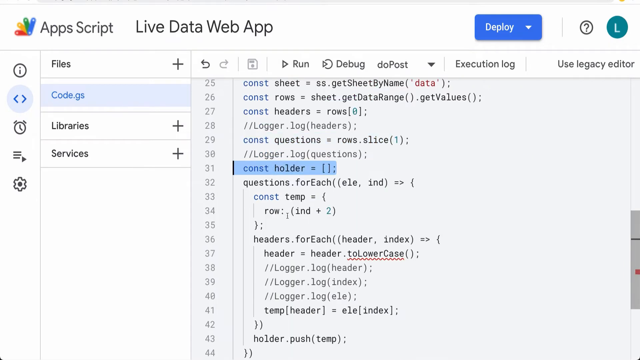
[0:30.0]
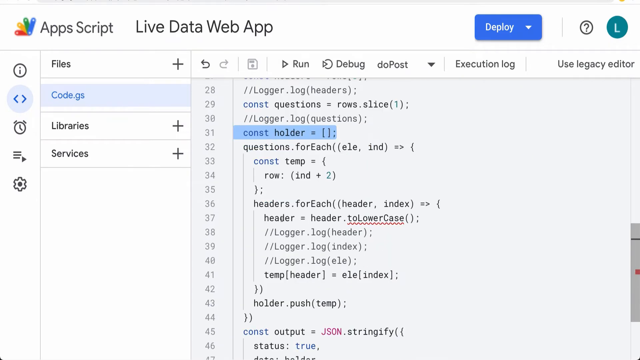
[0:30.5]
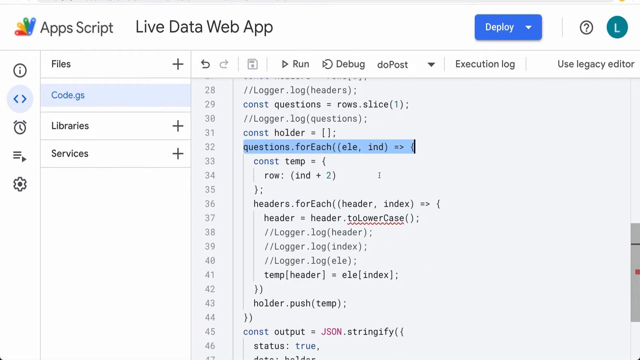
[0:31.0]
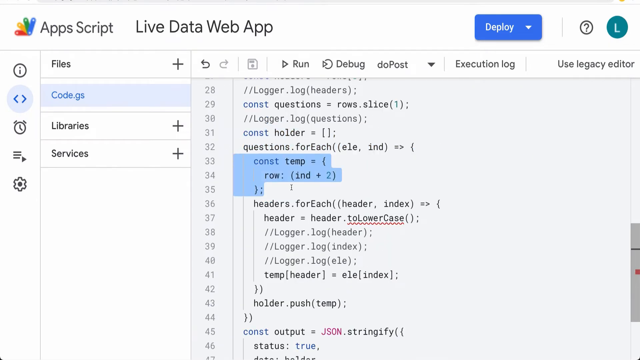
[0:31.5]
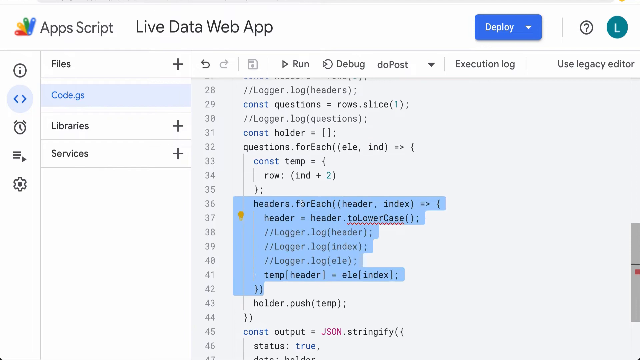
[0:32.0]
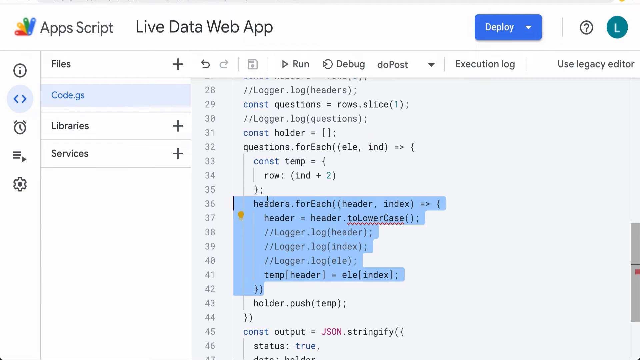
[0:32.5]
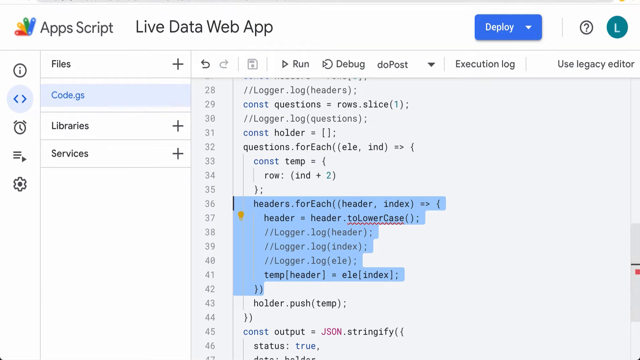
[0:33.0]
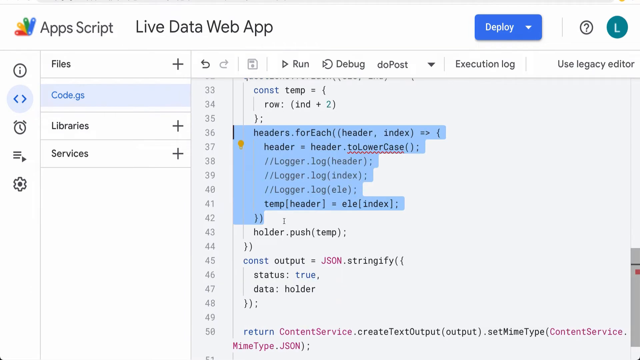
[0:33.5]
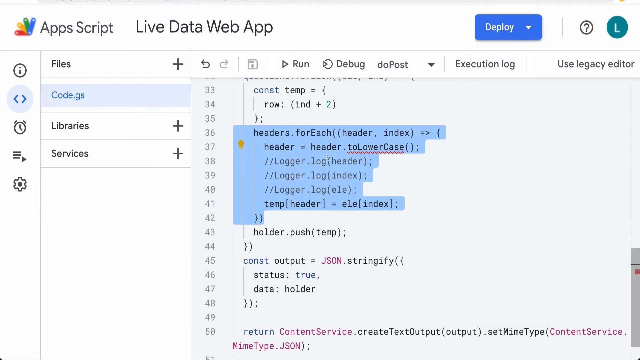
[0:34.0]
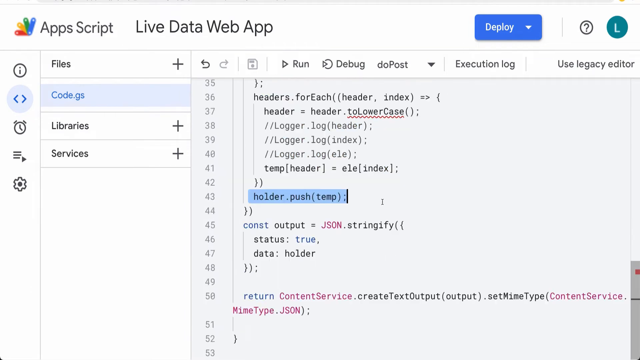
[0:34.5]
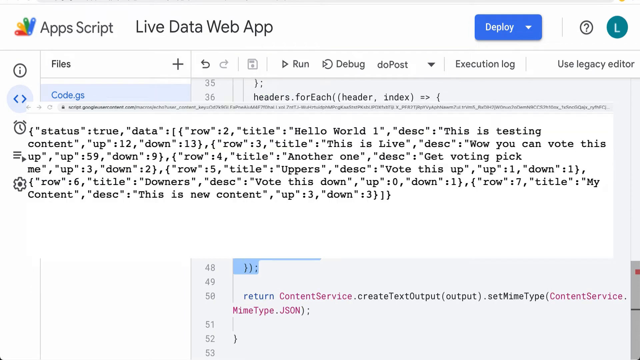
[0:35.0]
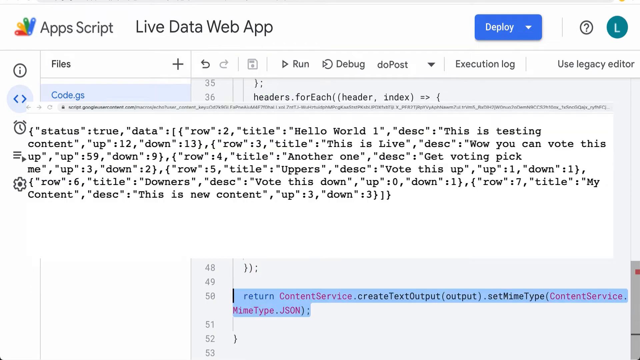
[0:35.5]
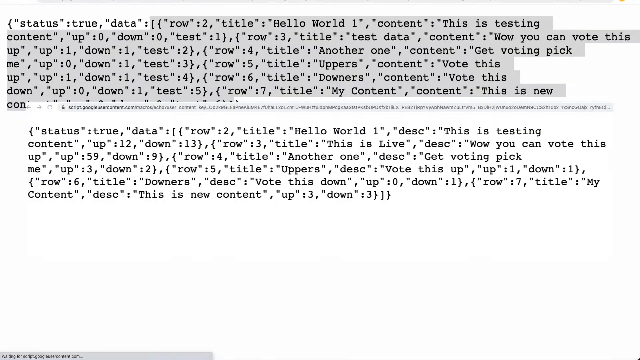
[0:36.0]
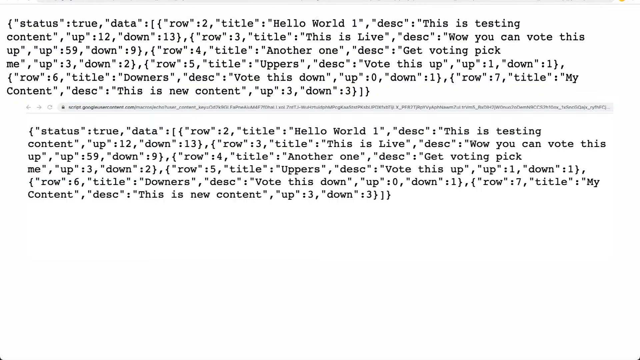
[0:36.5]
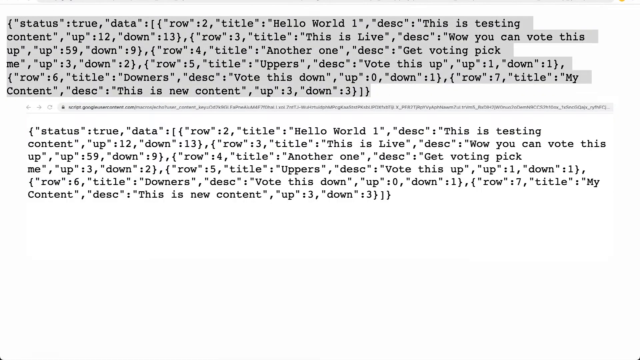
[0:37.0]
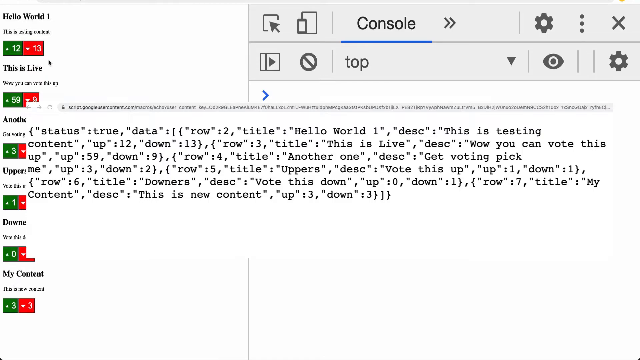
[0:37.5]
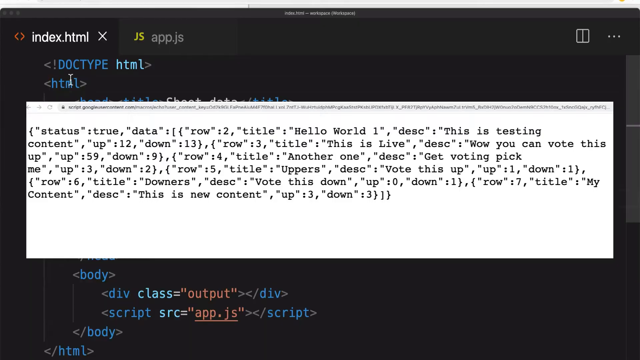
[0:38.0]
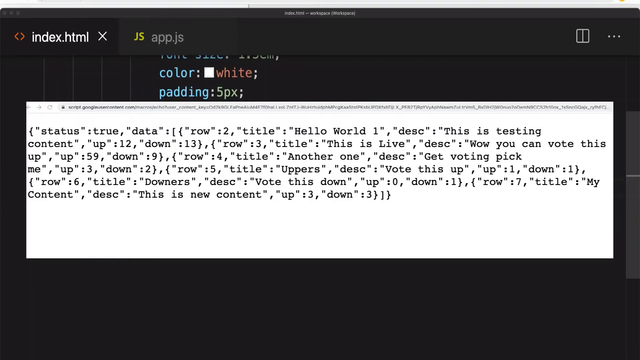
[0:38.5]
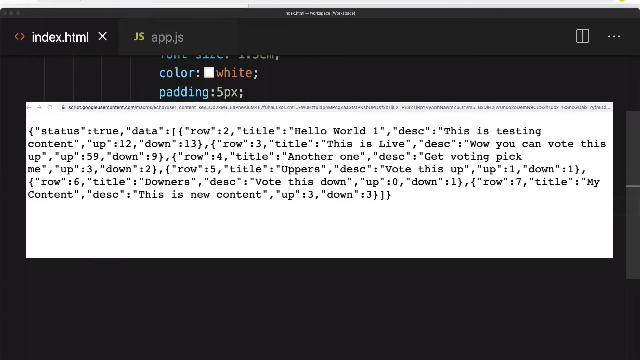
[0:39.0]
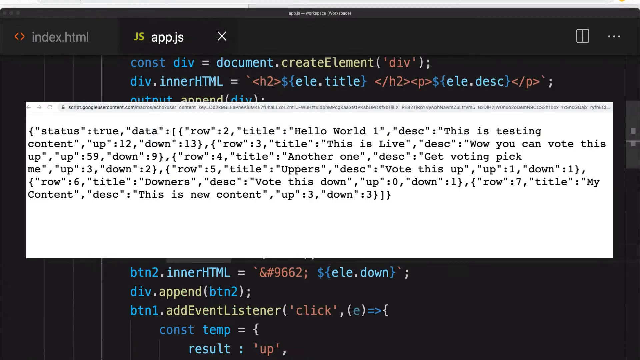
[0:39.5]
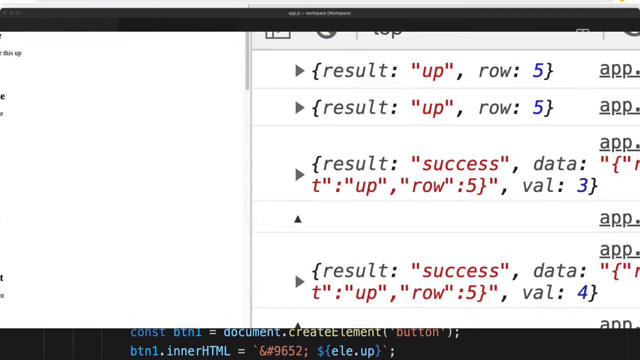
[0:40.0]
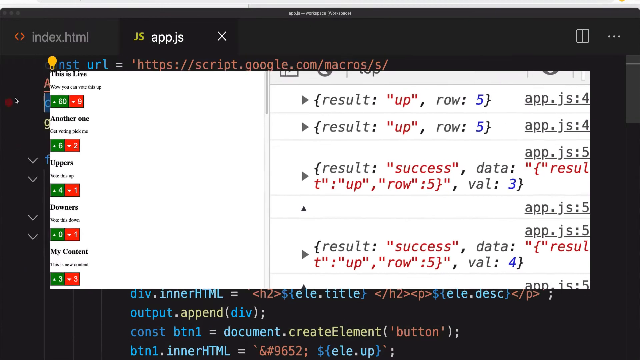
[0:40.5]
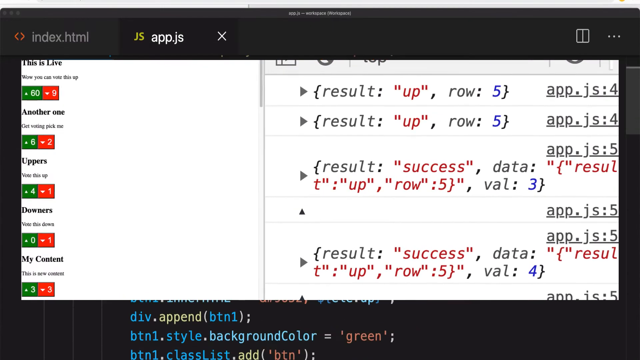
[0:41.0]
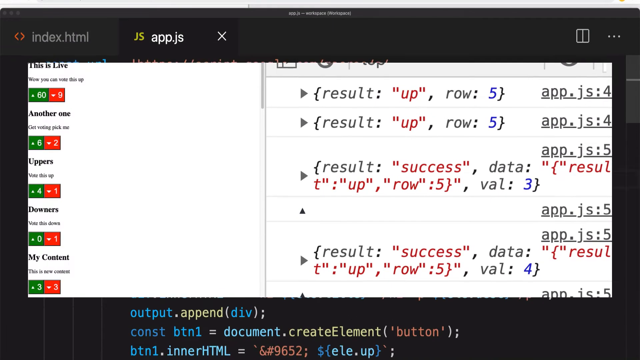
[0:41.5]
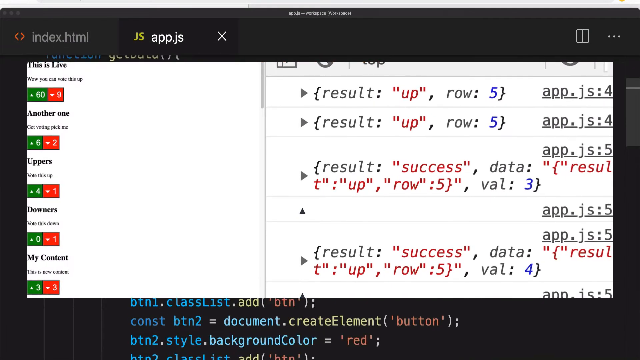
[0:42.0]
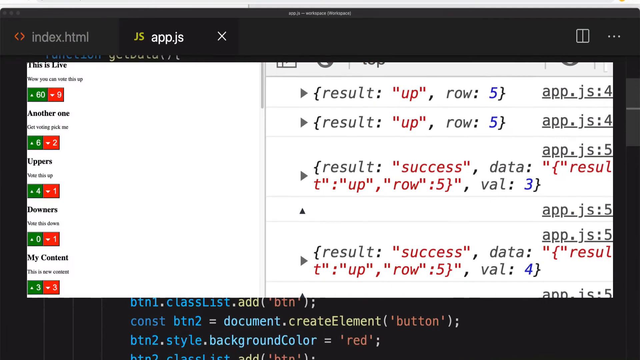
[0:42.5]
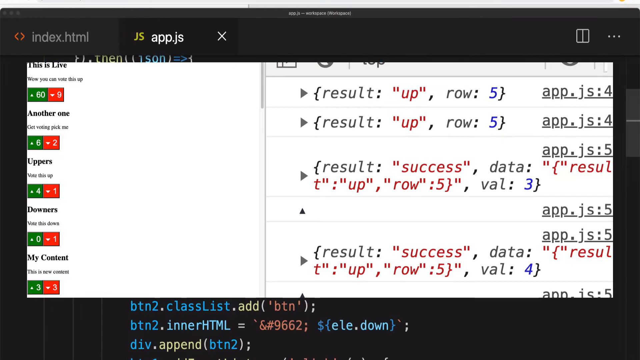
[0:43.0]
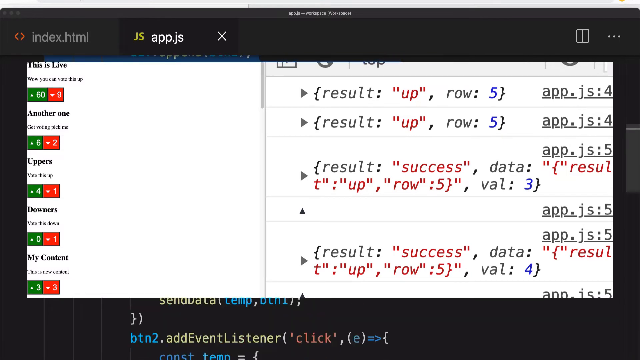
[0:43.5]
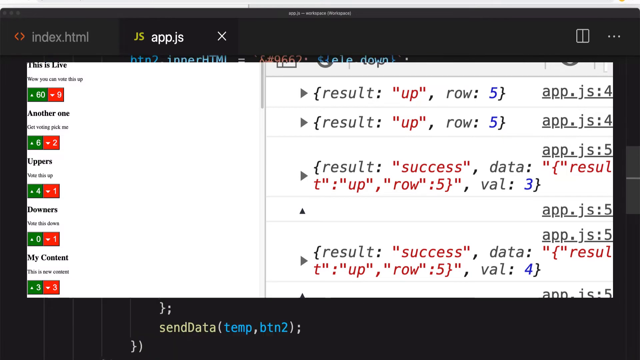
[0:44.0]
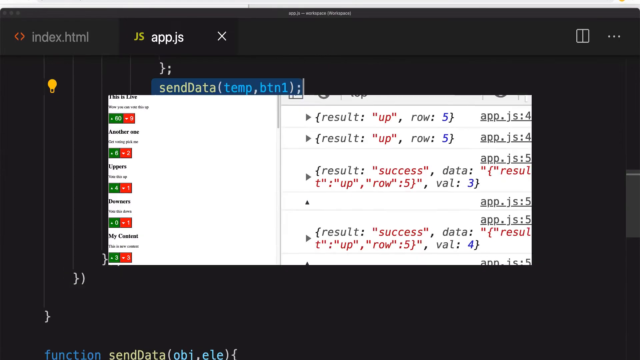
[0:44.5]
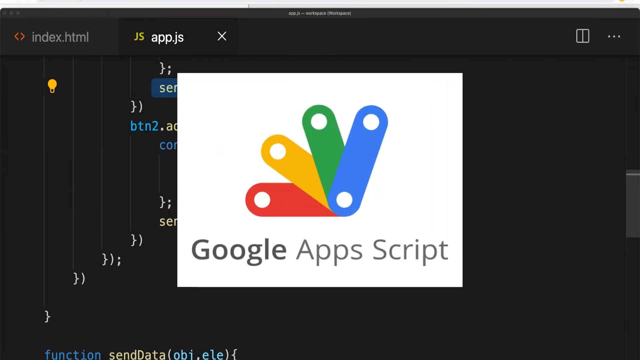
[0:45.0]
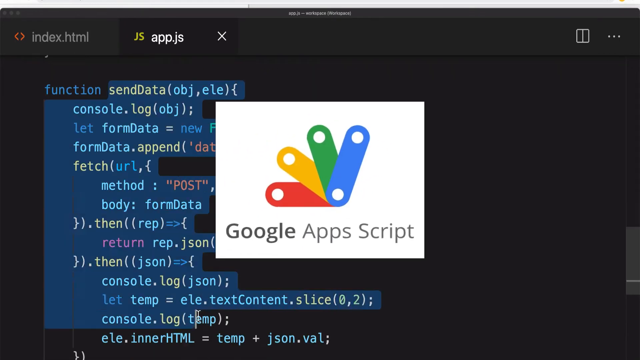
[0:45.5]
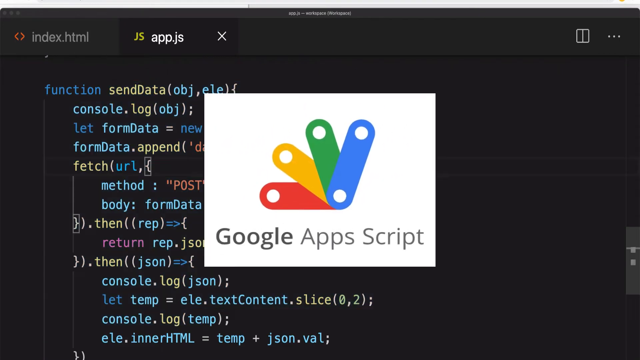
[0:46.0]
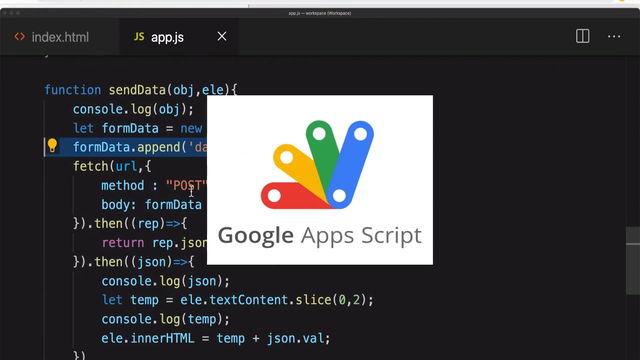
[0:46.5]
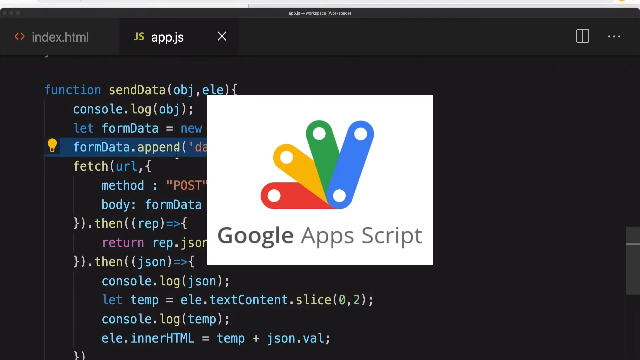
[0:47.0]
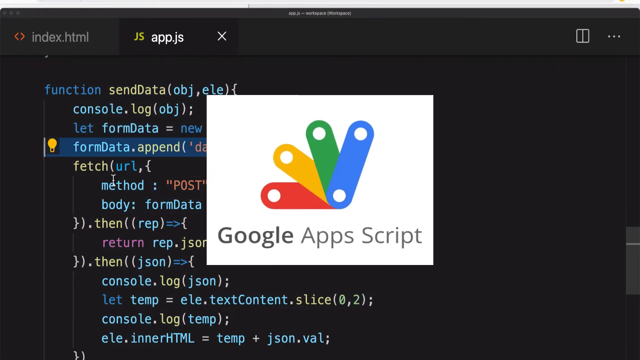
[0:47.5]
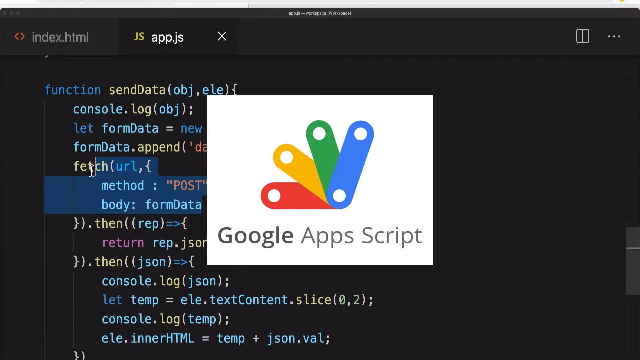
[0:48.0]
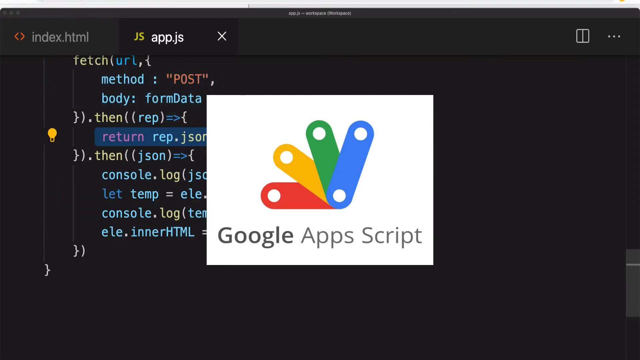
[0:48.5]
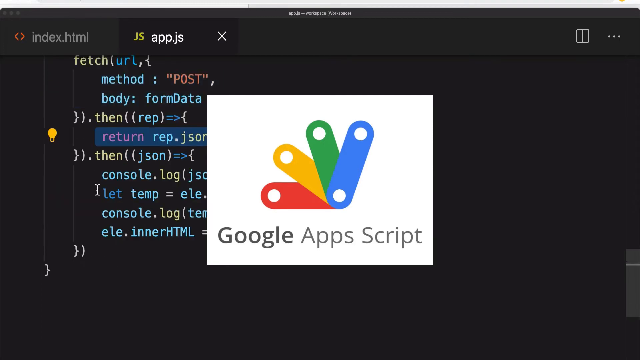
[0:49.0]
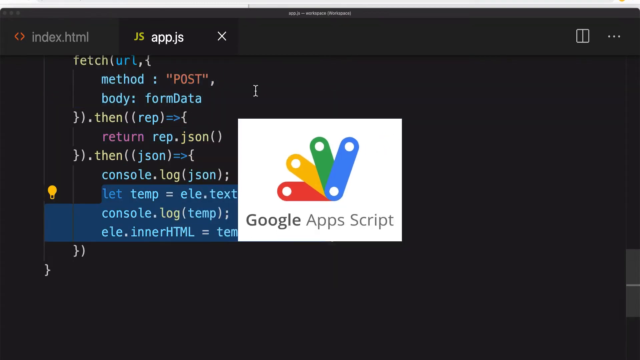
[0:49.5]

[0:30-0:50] Google and the JavaScript connection using fetch appear on the document, which has green, yellow and red on it. Java plus JS is shown, with JS written in yellow and the plus sign in green. Boxes are highlighted in blue and then sent to the script to be displayed. At the back of the display, Google Apps Script is running, converting the data for a live data web app that displays the JavaScript.